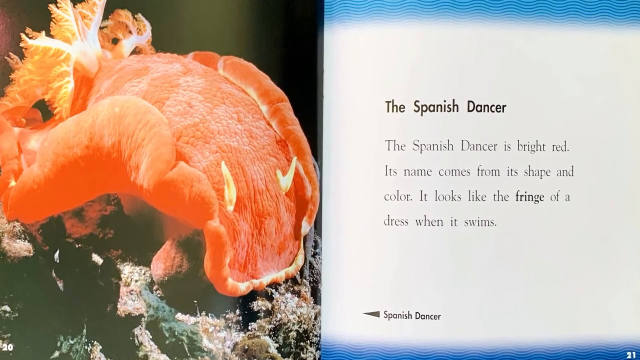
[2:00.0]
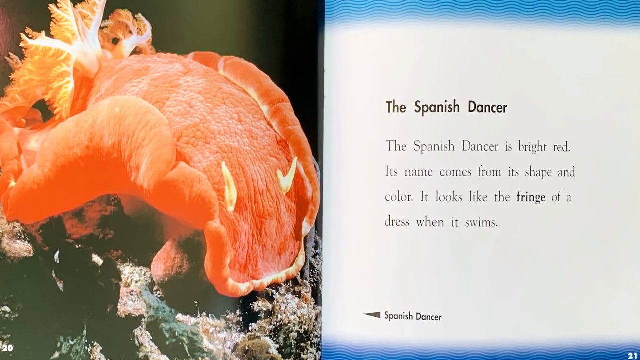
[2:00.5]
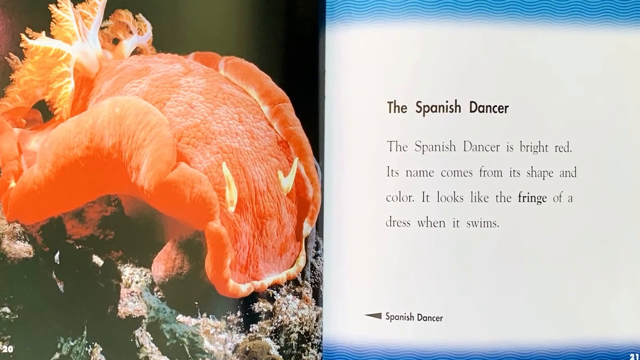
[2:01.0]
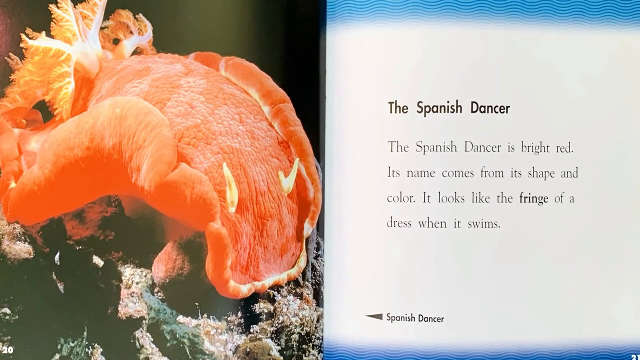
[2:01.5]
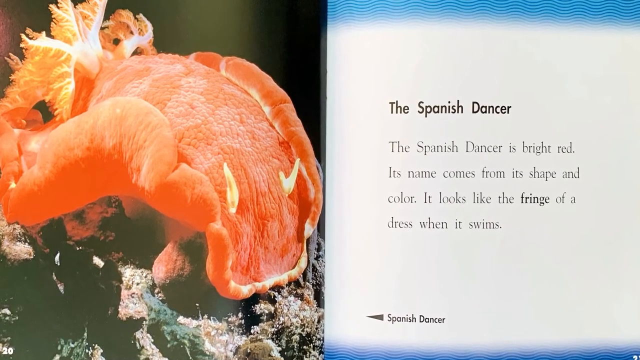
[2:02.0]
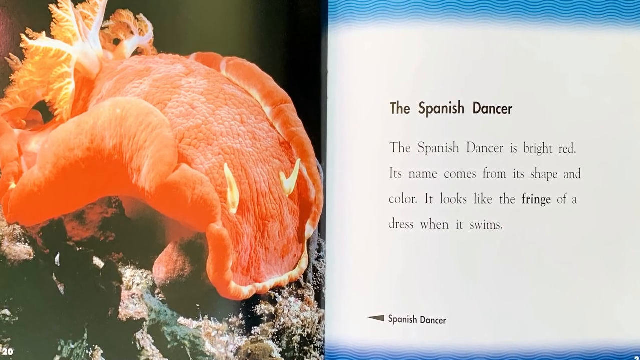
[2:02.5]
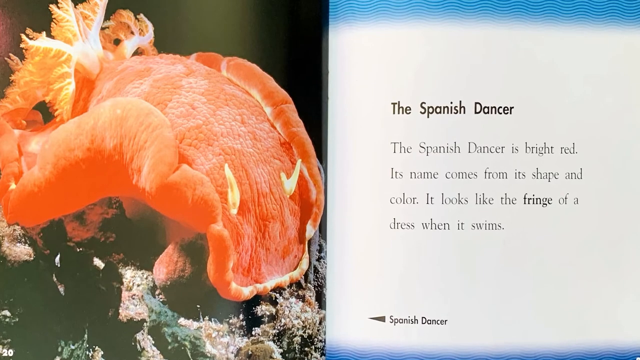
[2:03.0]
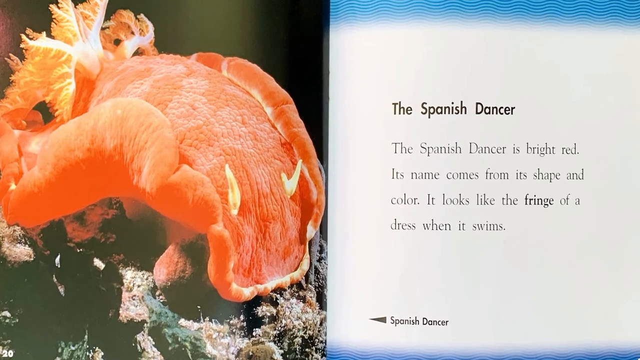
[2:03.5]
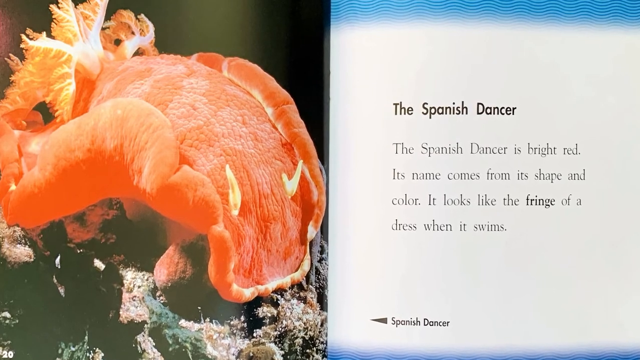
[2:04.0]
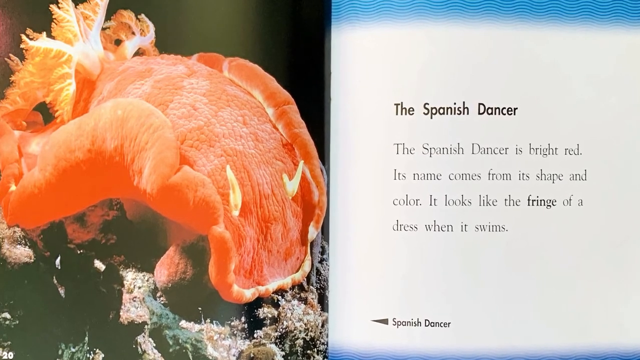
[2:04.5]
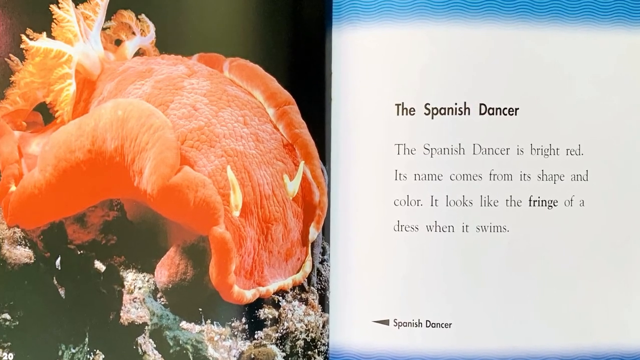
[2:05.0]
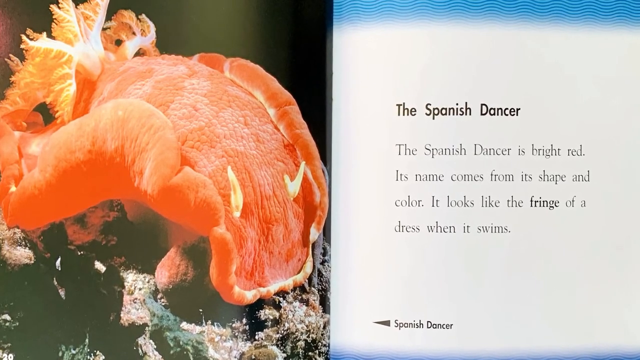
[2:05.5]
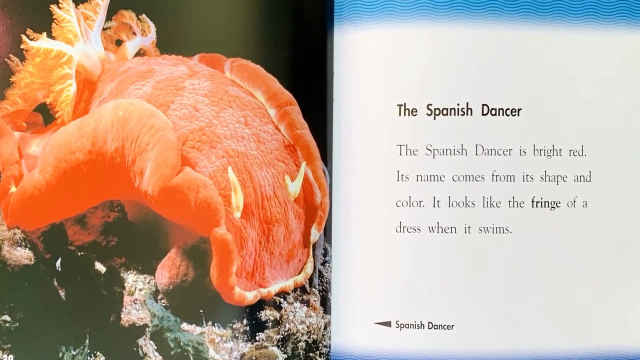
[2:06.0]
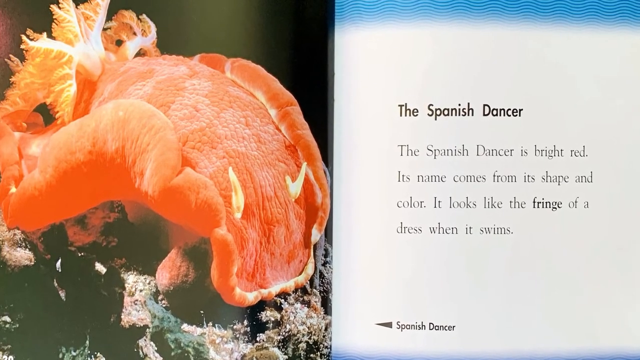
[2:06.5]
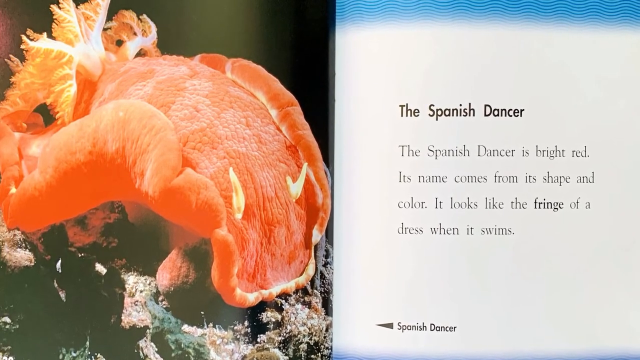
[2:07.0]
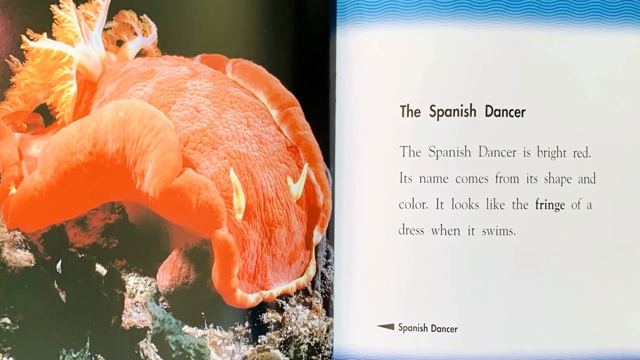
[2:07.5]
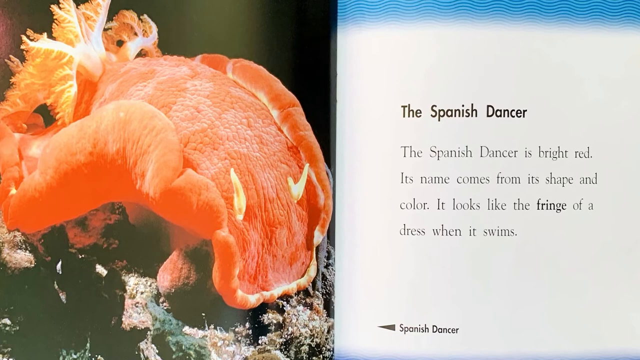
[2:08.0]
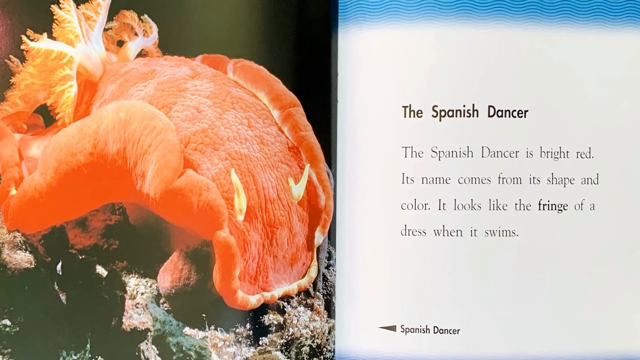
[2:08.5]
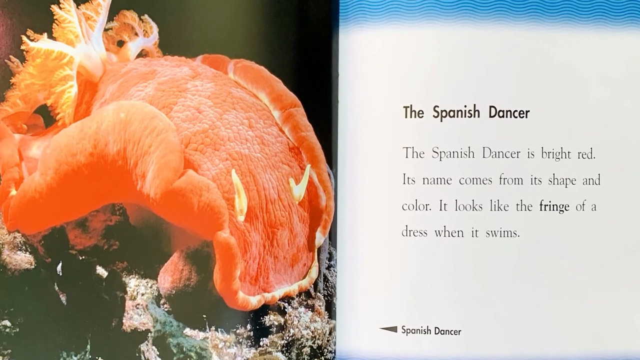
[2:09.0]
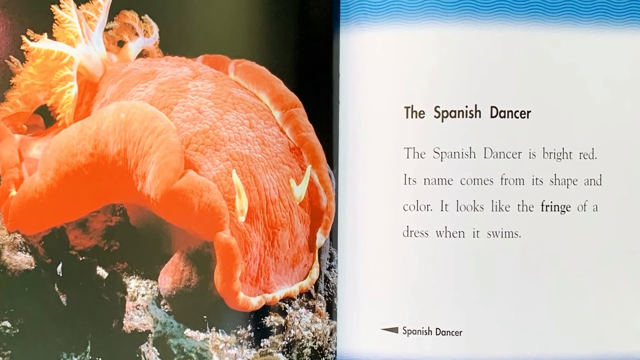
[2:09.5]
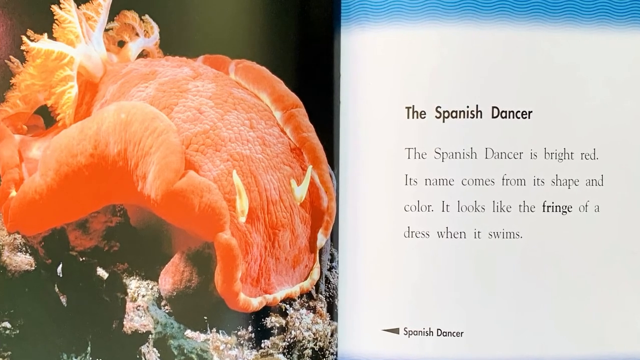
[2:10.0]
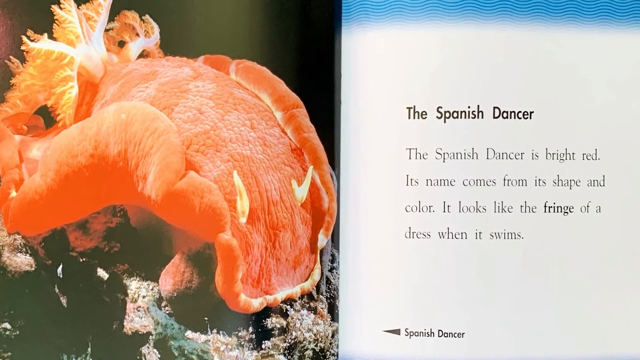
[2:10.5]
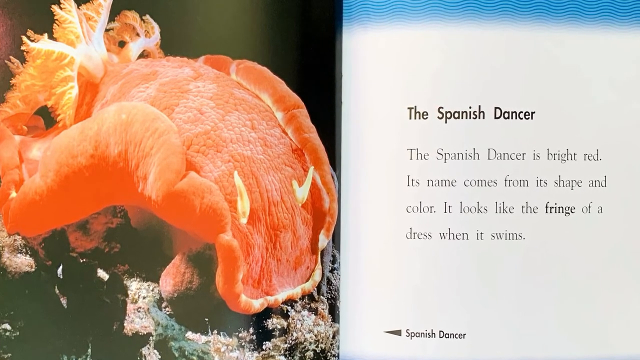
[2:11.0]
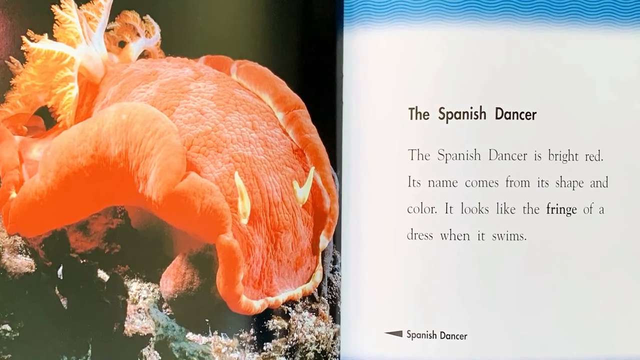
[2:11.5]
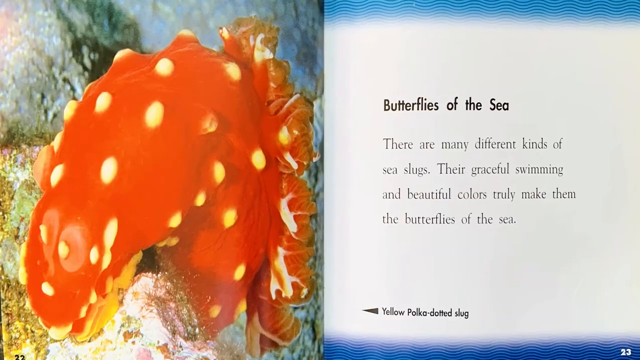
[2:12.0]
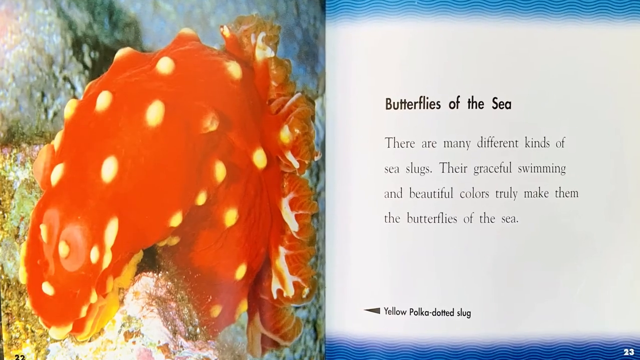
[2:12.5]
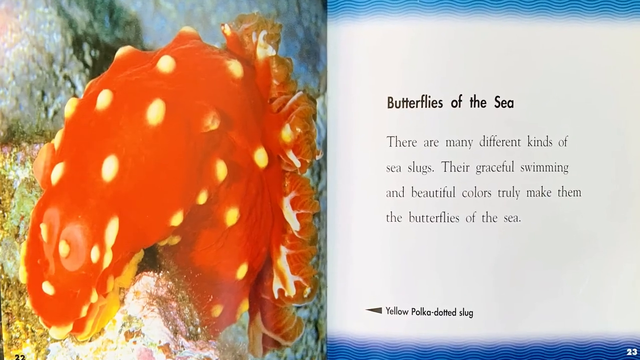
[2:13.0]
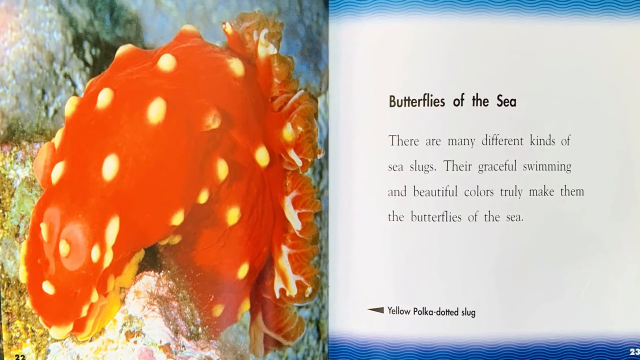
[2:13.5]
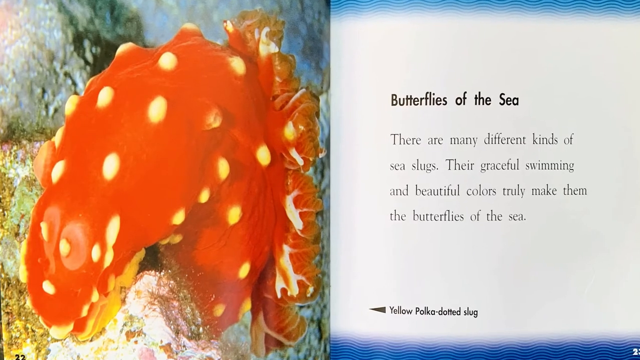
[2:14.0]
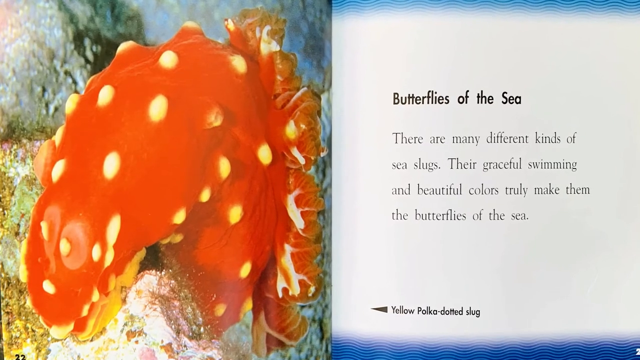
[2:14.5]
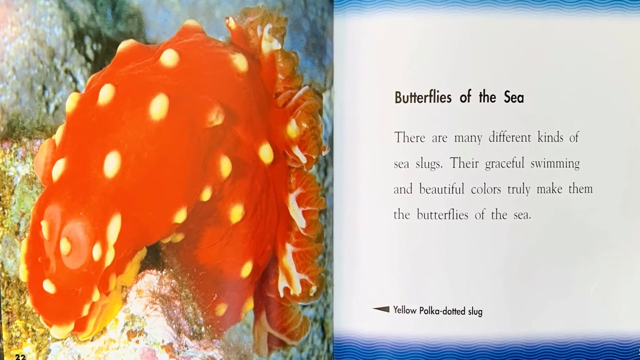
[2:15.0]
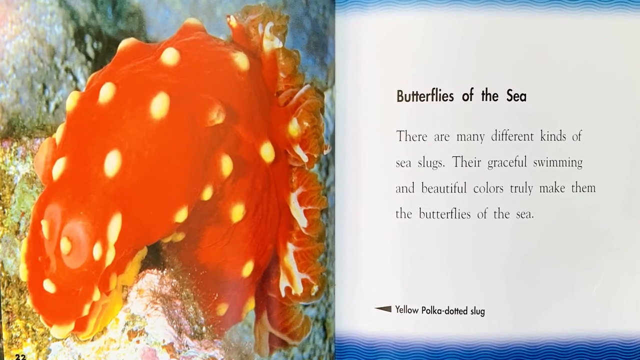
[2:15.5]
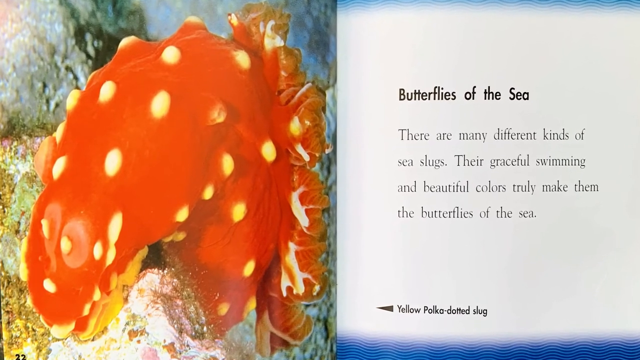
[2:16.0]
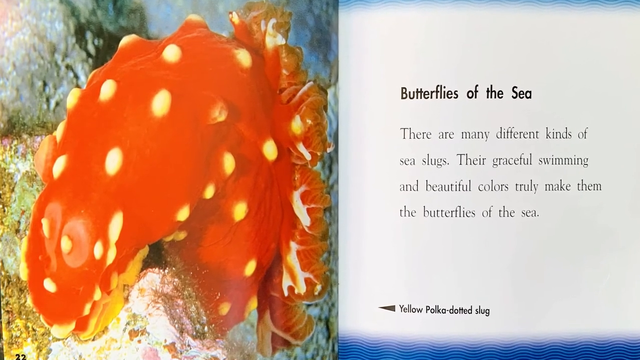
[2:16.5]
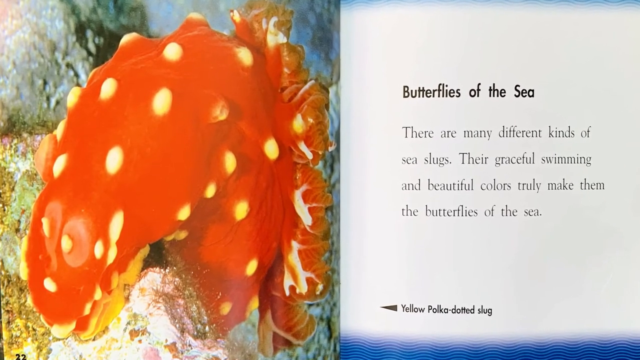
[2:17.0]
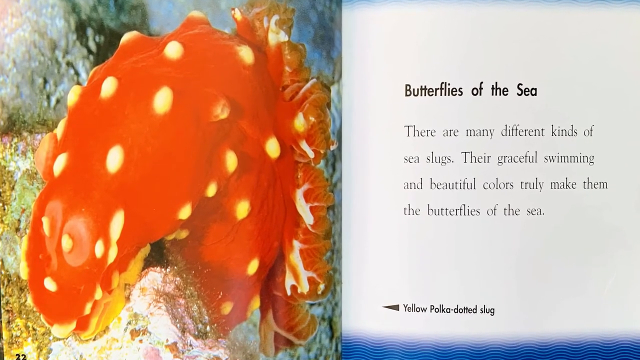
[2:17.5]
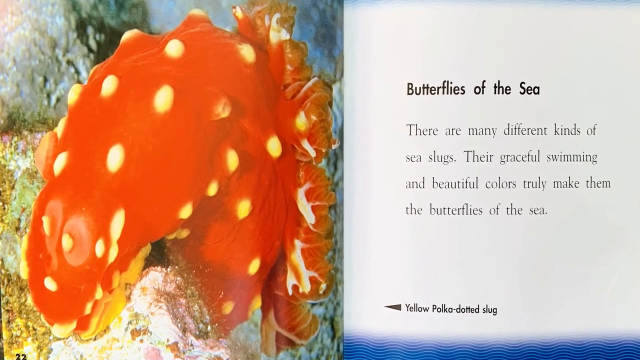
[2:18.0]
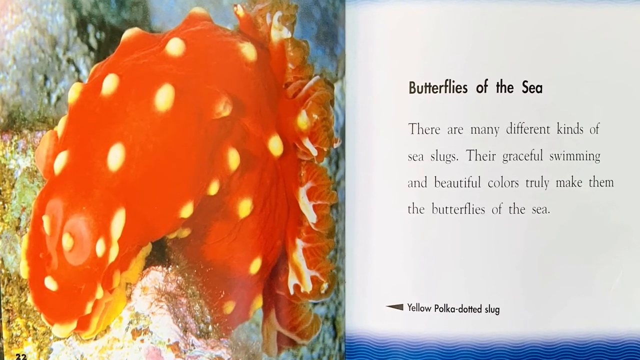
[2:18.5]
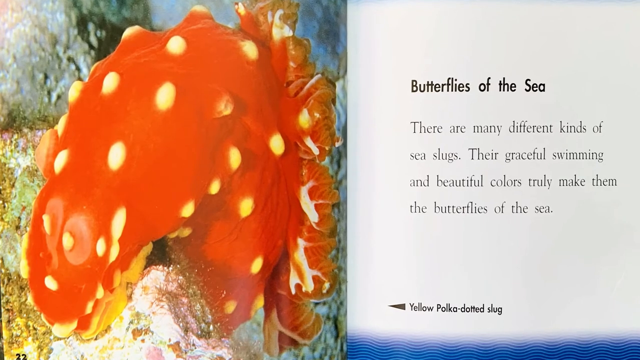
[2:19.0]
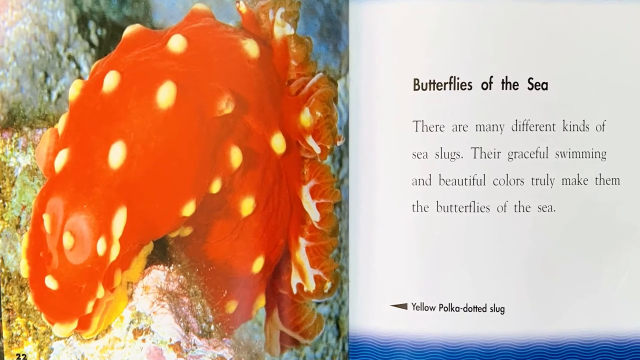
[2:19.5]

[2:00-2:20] An open book shows, on the right, a white page with the bold black heading "The Spanish Dancer." Beneath it, in smaller, less bold black font, it reads "The Spanish Dancer is bright red. Its name comes from its shape and color. It looks like the fringe of a dress when it swims." At the bottom left of the page, a black arrowhead faces left, next to the label "Spanish Dancer." On the left is an image of a large, faded red-looking slug that seems to have a wrinkled texture on top, two short white antennae coming out of its head, and a yellow tentacle-like tail coming out of its lower back, sitting on light brown sea coral. The view then changes to another two-page spread. The white page on the right has the bold black heading "Butterflies of the Sea" and beneath it, in smaller, less bold text, "there are many different kinds of sea slugs. Their graceful swimming and beautiful colors truly make them the butterflies of the sea." At the bottom left, a black arrowhead points to the left, next to the label "Yellow Polka Dotted Slug." The left page has an image of a large, thick, round, bright red slug that appears to have small, very light yellow raised bumps all over its body. Its body is somewhat slumped over tan and yellow coral at the bottom of the ocean. The camera slowly zooms in closer on the slug.